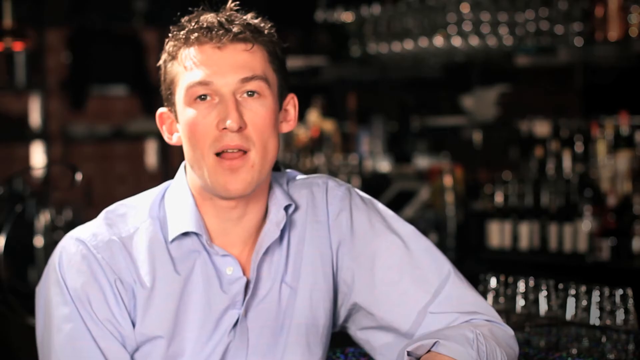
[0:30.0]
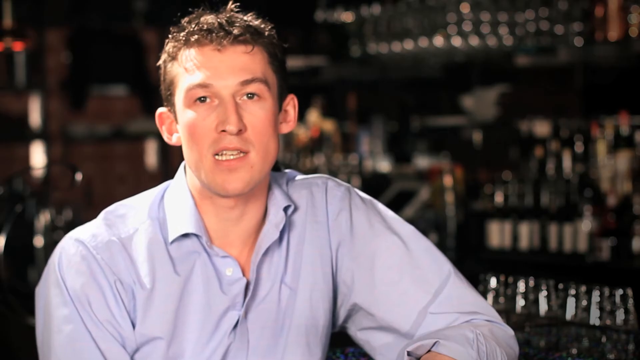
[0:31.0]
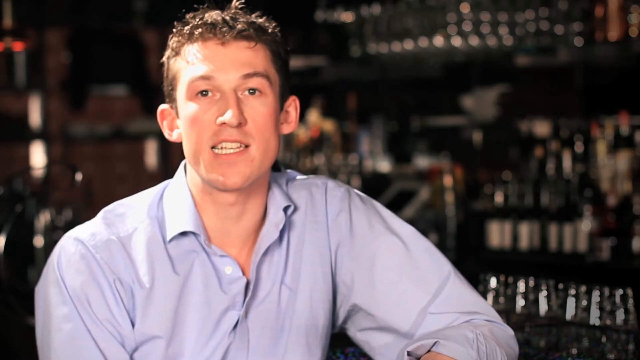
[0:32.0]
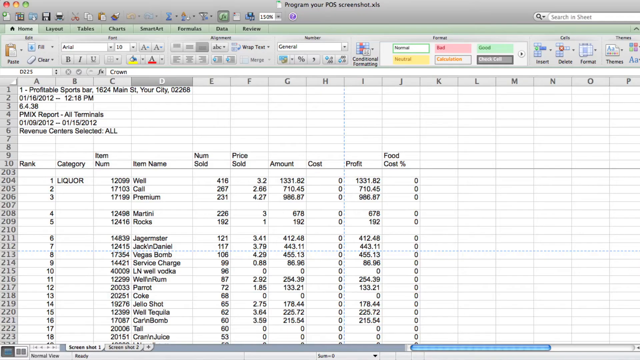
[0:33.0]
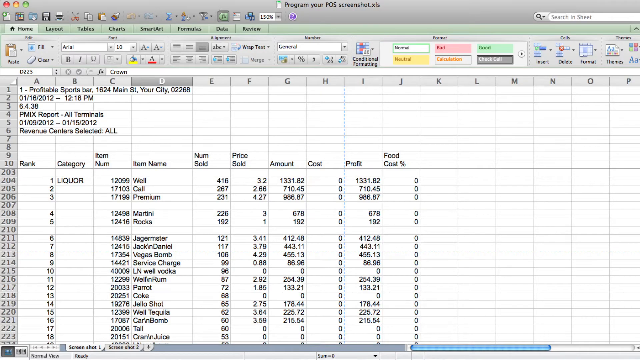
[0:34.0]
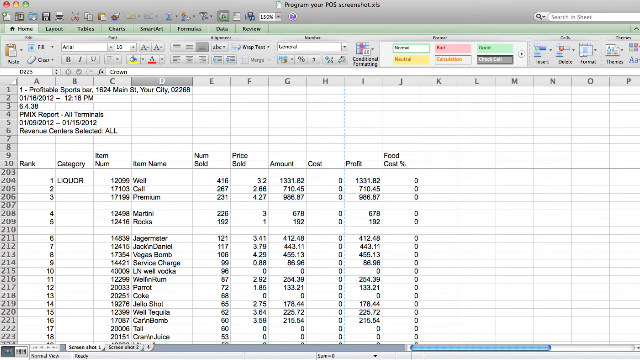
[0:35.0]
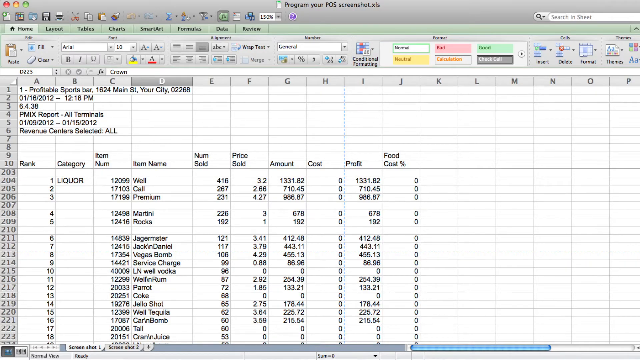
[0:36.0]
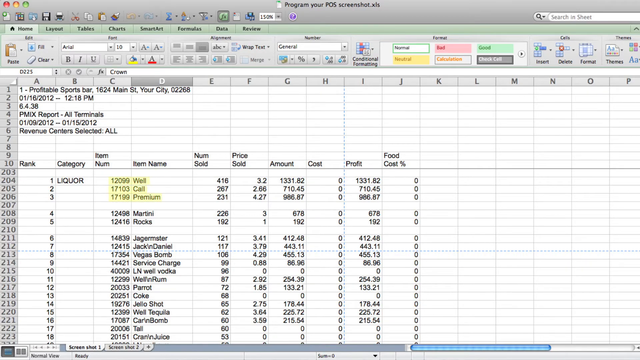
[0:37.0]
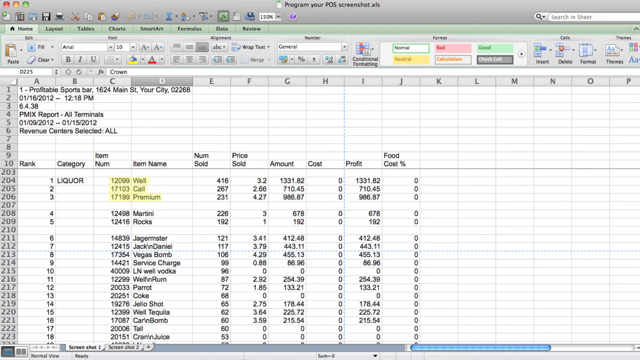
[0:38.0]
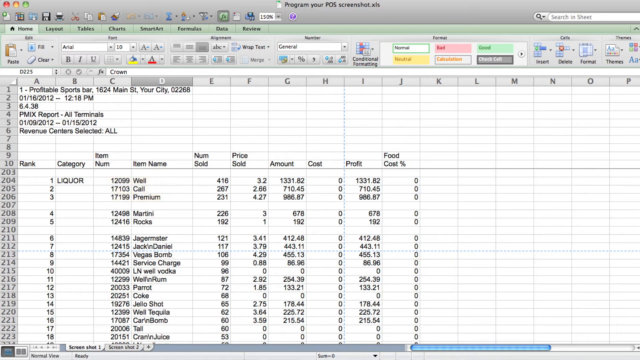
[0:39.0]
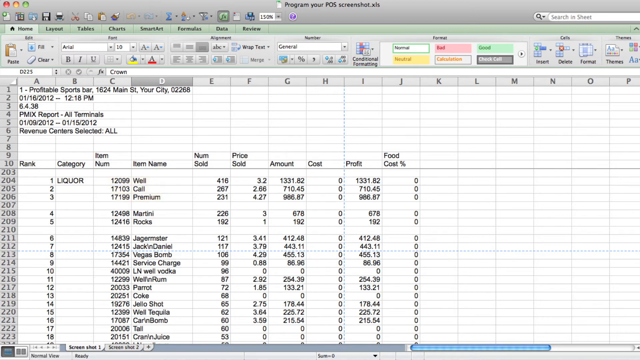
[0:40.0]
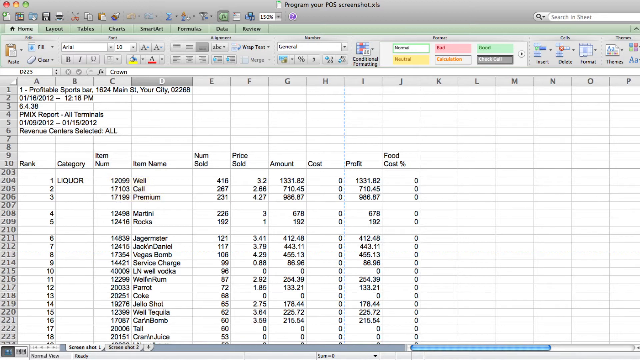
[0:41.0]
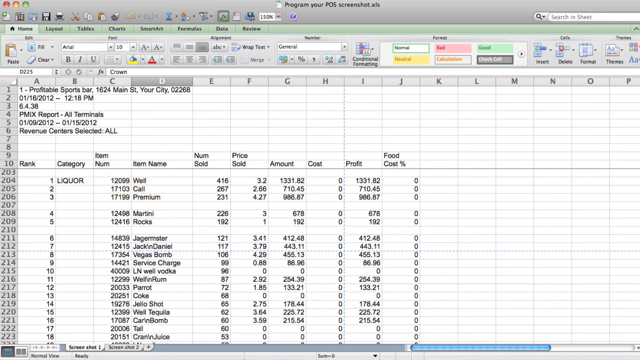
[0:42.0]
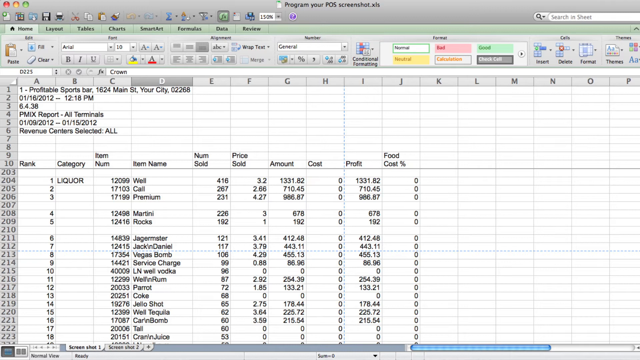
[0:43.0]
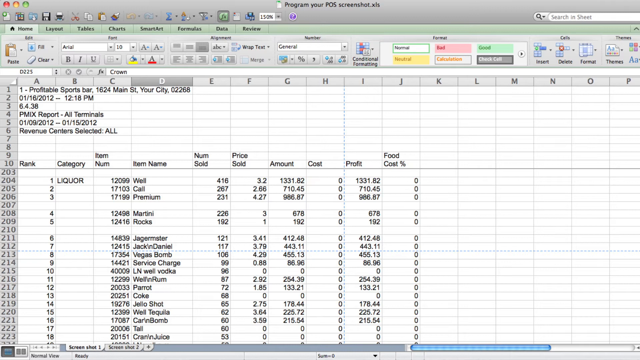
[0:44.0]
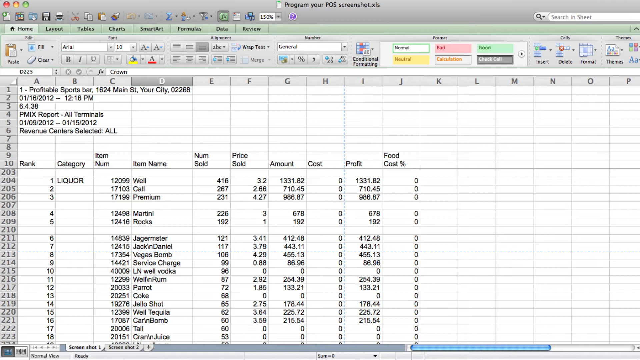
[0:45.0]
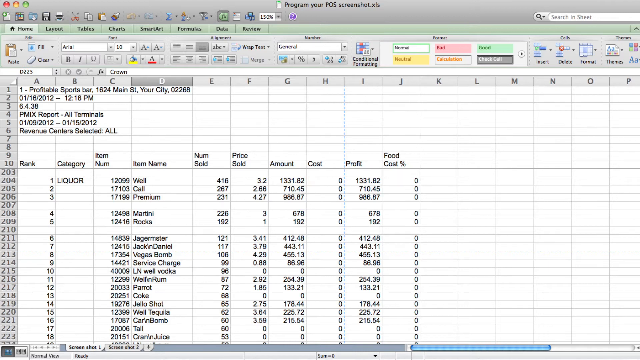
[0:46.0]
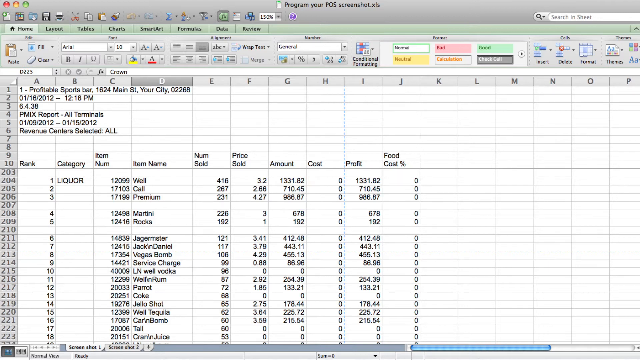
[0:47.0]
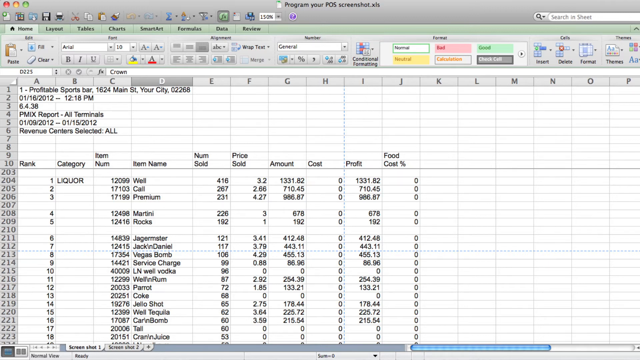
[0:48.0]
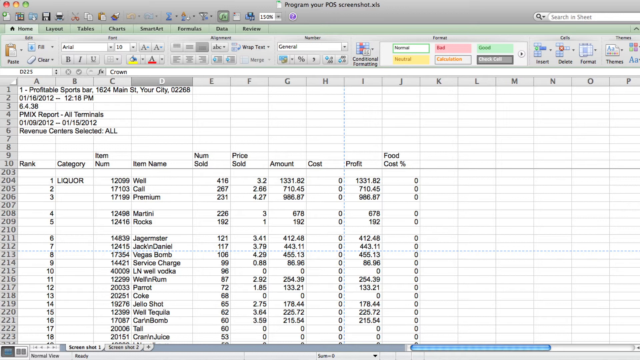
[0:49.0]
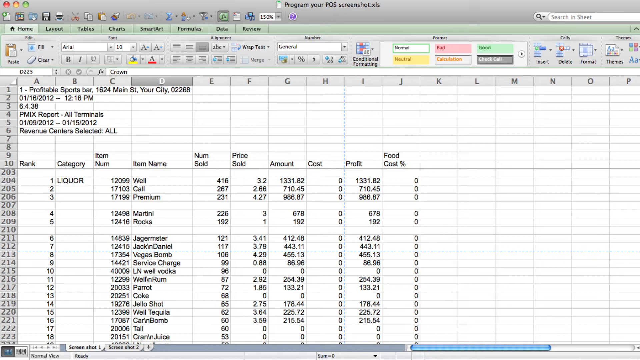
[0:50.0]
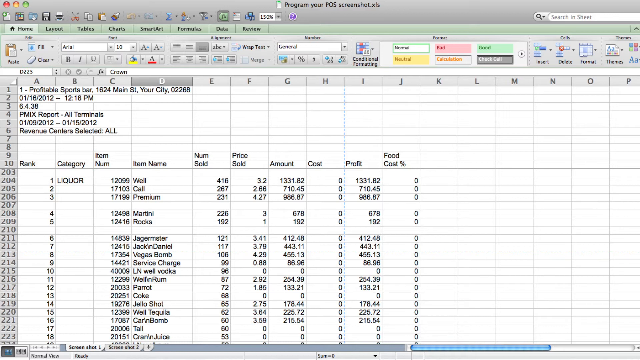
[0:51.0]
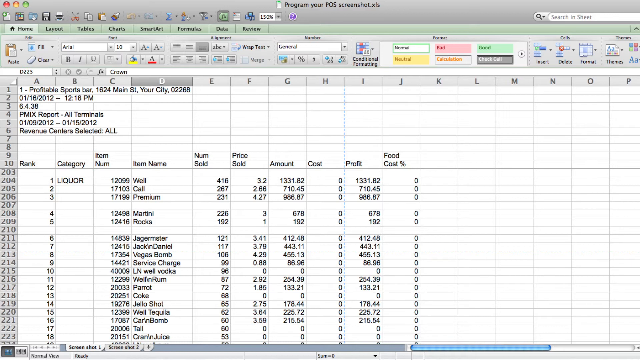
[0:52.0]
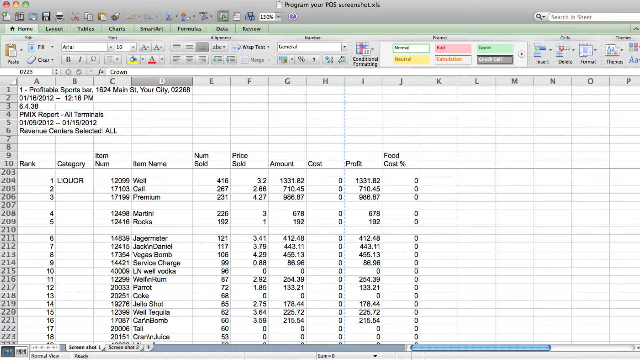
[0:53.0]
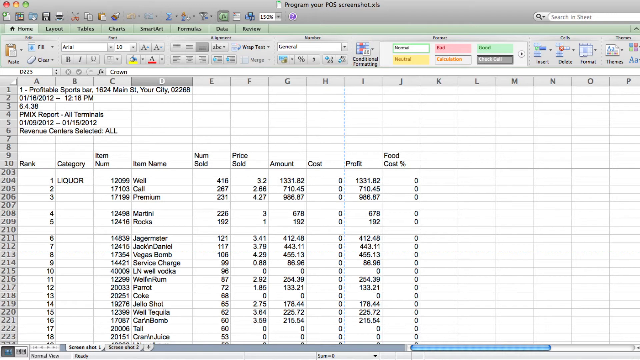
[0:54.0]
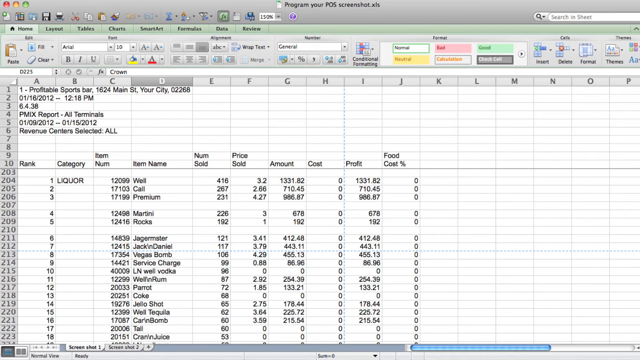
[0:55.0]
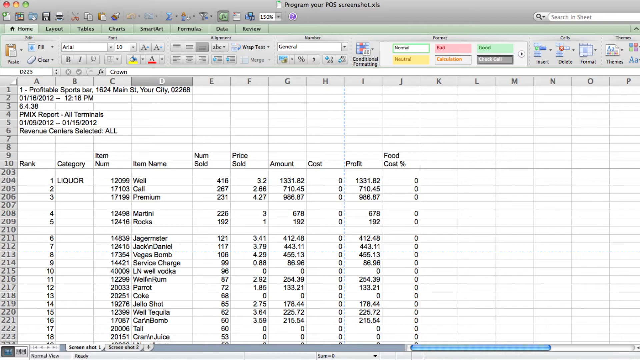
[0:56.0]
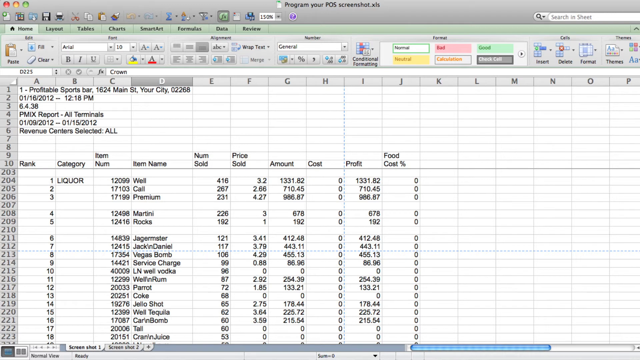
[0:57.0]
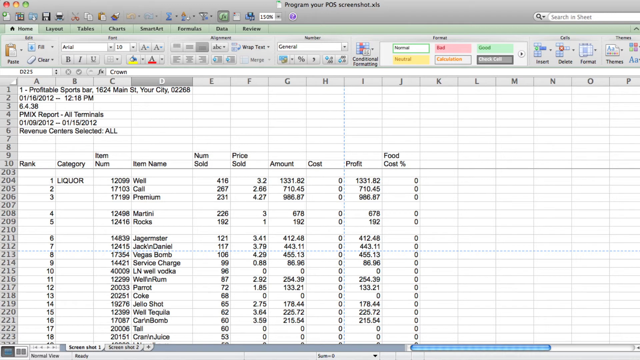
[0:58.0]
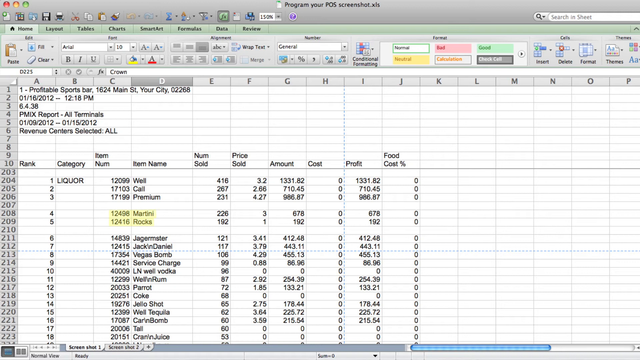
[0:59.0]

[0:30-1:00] A tighter shot shows the man from the chest up to the top of his head. He wears a blue shirt with the top button unbuttoned, and behind him are blurry images of liquor, glasses and a mirror as he speaks to the camera. The video then cuts to what appears to be an Excel-type spreadsheet, "program your POS screenshot.xls". It shows the name of a bar, "profitable sports bar", a date and time, a version, "PMX report all terminals", a date period of "1-9-2012 to 1-15-2012", and "Revenue center selected all". Column headings follow: rank, category, item number, item name, number sold, price sold, amount, cost, profit and food cost percentage, with various names and data points under each column.